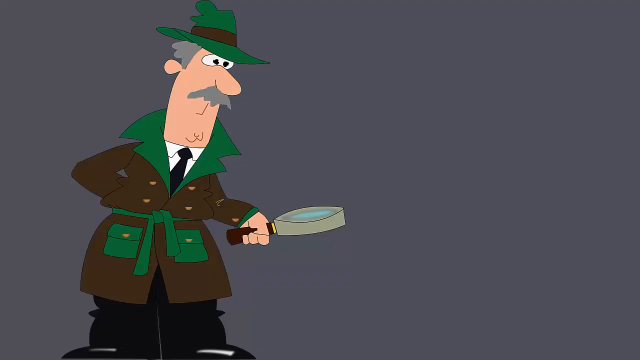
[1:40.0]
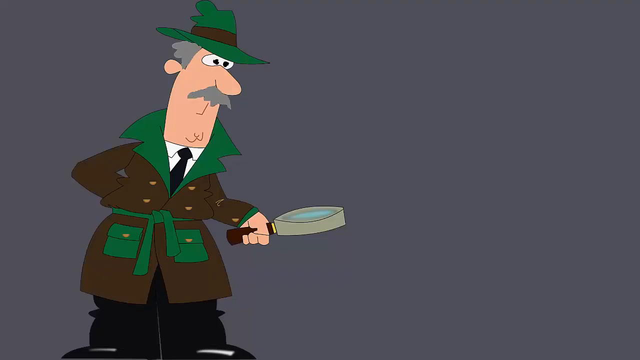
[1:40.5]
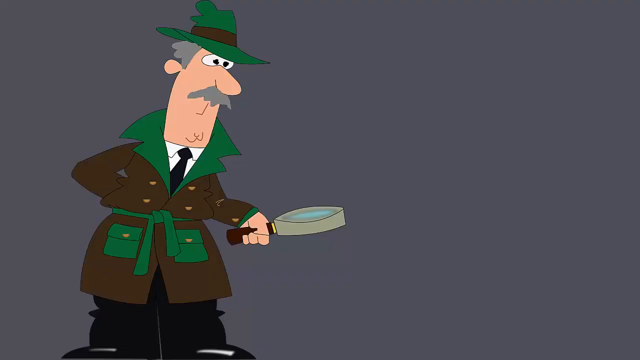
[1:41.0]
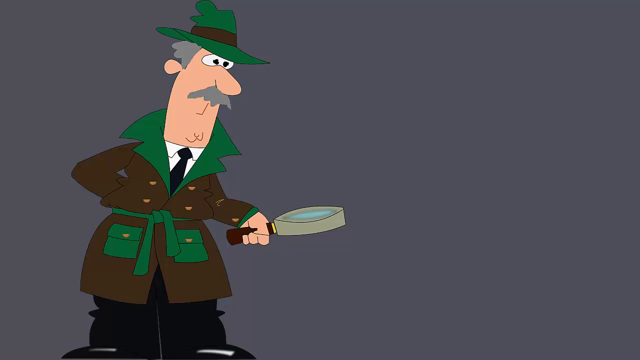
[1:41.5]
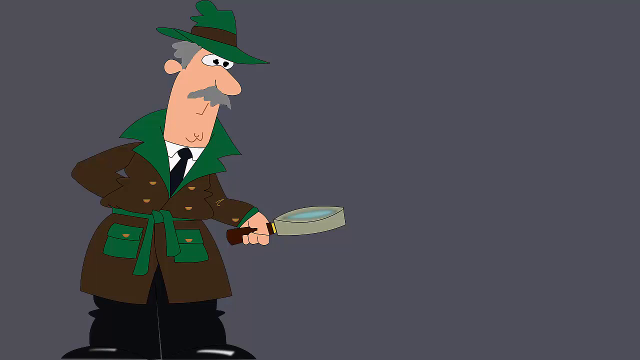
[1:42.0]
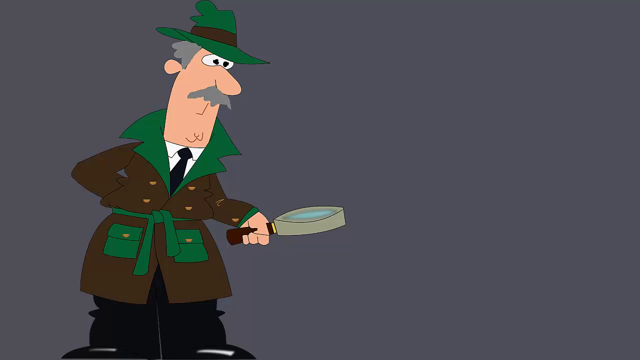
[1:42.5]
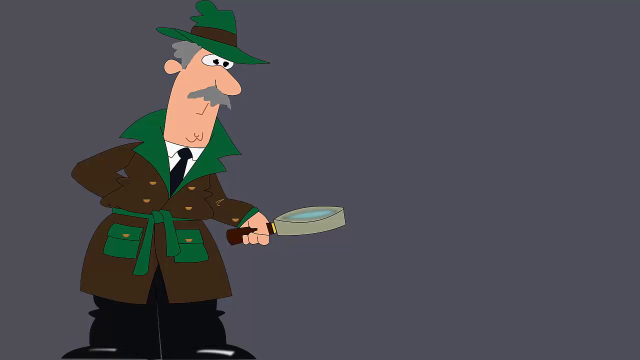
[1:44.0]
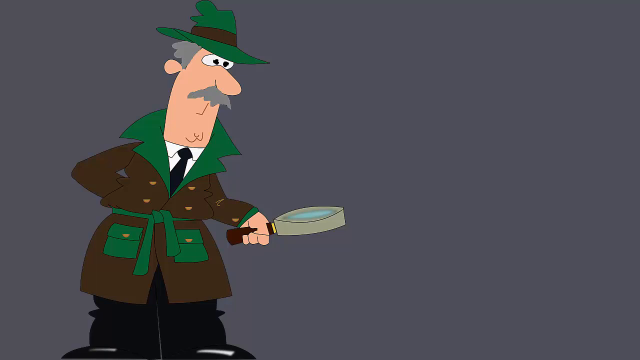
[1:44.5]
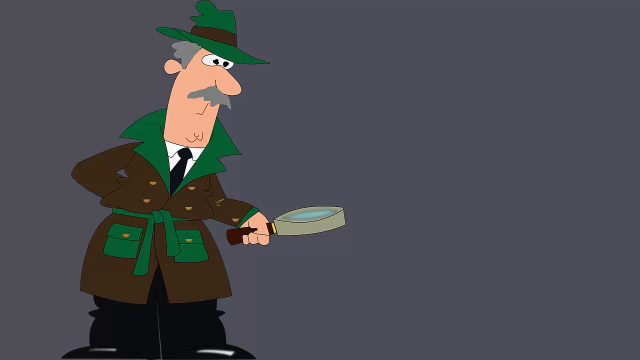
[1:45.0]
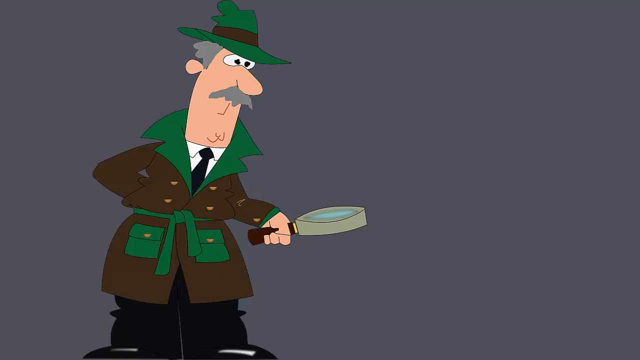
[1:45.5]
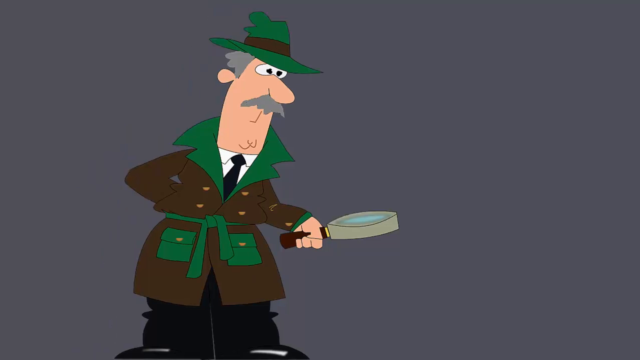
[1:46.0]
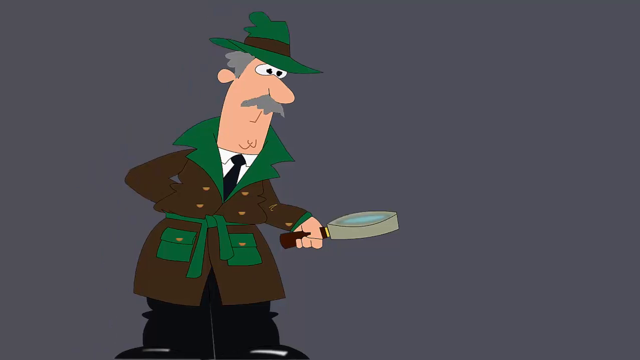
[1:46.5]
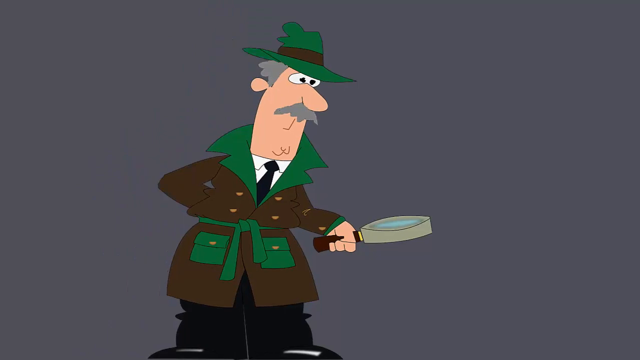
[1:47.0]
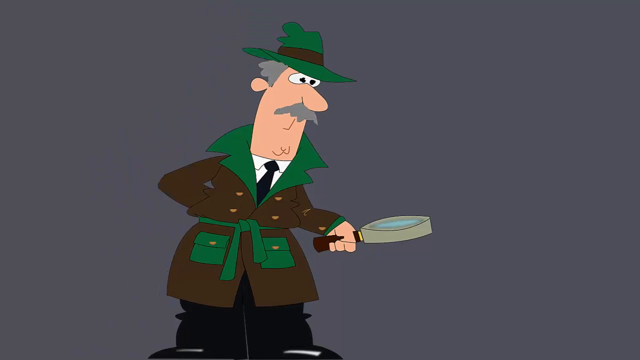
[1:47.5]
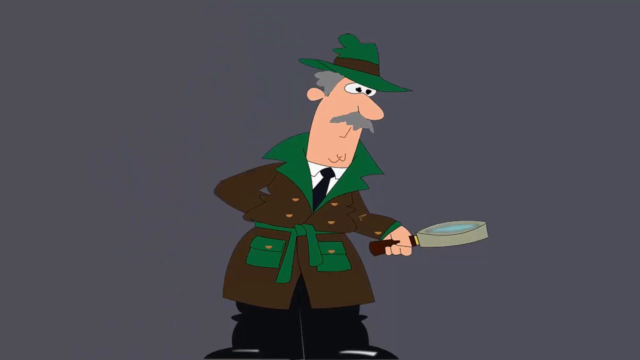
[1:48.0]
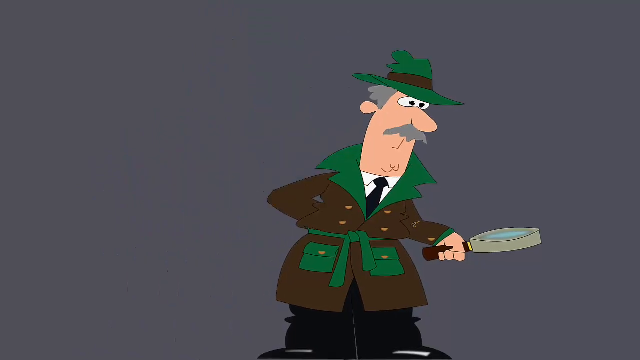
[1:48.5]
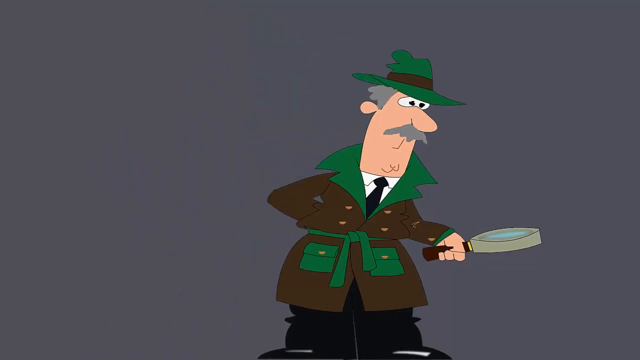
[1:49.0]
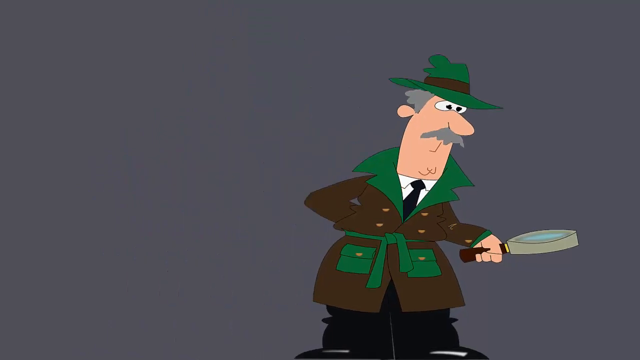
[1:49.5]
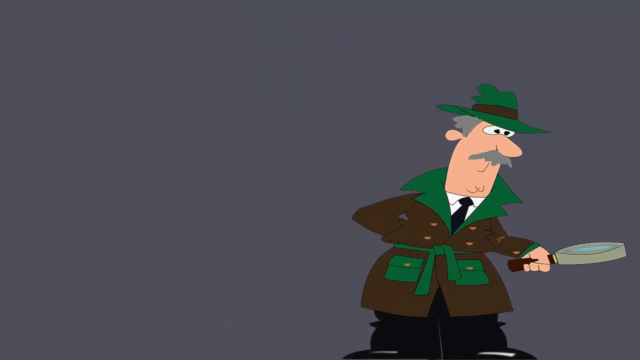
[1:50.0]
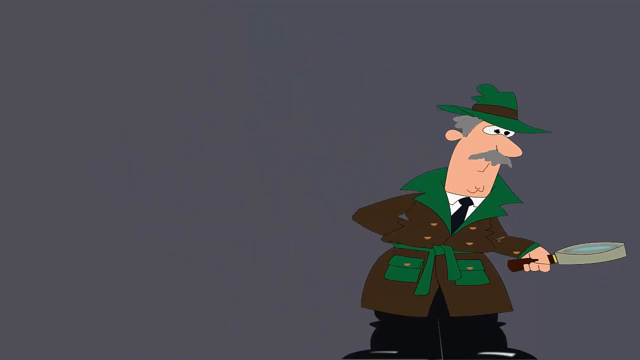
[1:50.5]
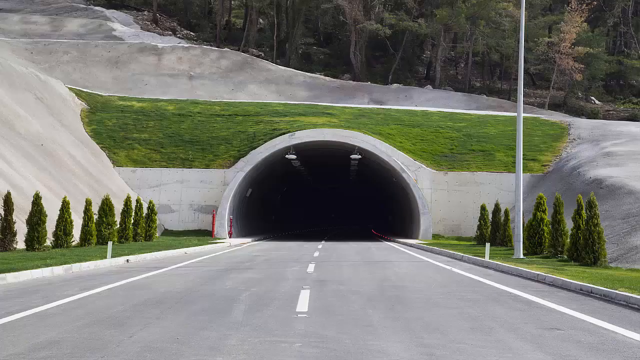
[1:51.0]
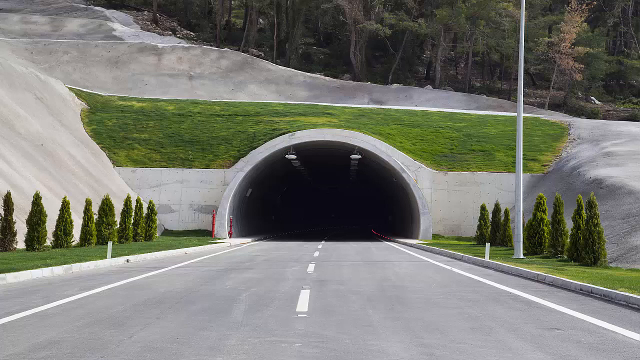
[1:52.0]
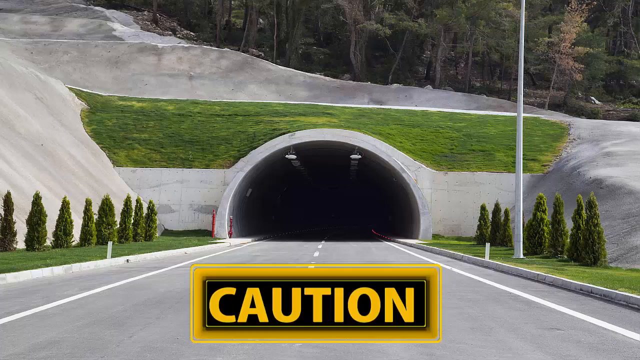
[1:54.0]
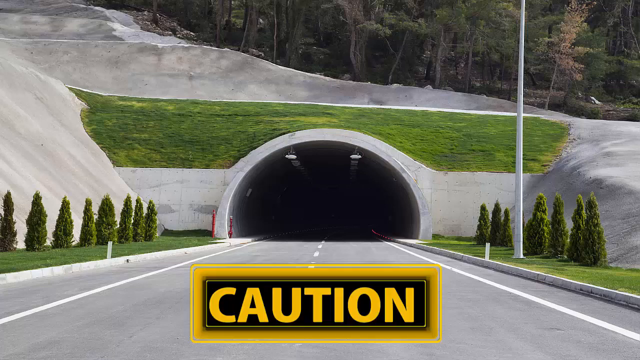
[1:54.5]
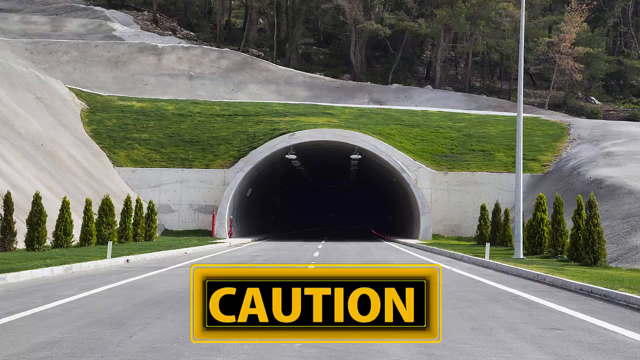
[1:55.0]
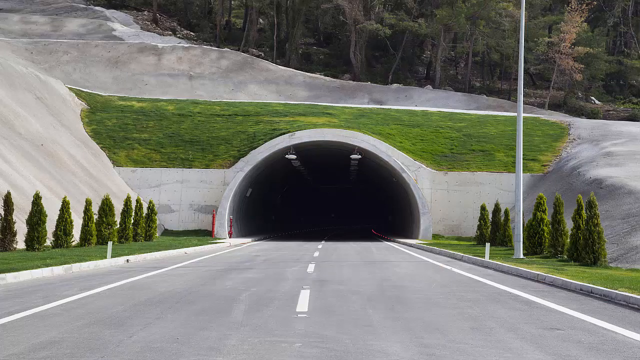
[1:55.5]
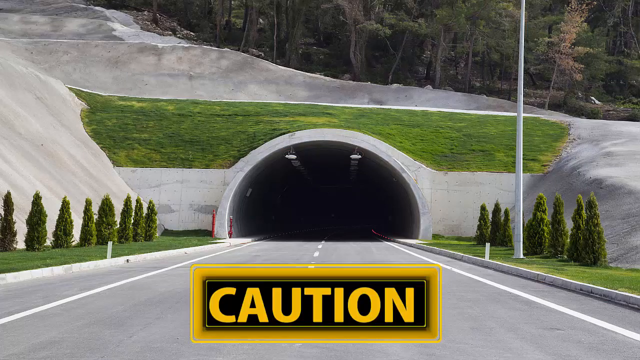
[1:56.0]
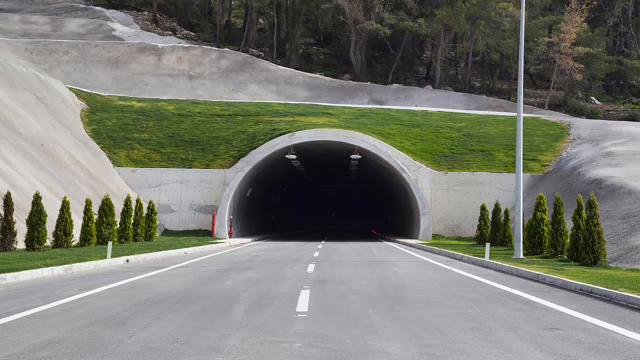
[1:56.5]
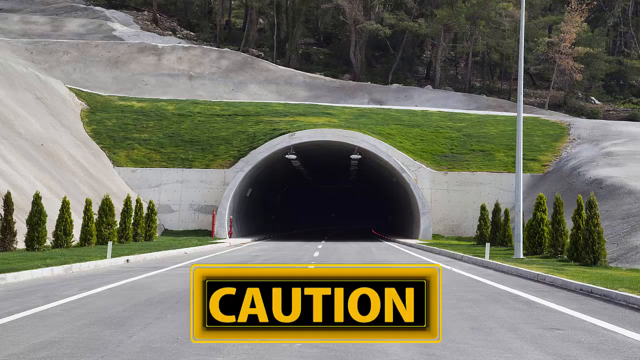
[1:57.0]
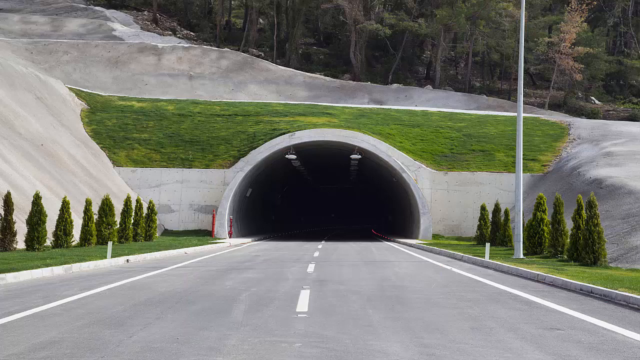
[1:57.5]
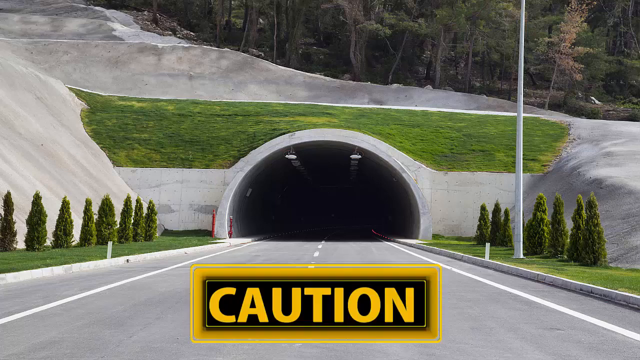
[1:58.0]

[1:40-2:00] An animation shows a cartoon character: a white man with gray hair and a gray mustache, wearing a green hat, a brown coat with a little green in it, black pants and black shoes, carrying a magnifying glass. He has almost an Inspector Gadget kind of look. The animation movement is very slow. Next comes footage, possibly CGI or real, of a road and a tunnel, with some grass above the tunnel and a bunch of trees in the background. The surroundings look like concrete, with concrete-like hills. The tunnel has lights. The word "caution" flashes on the screen in yellow writing on a black background with a yellow border. The view then returns to the Inspector Gadget-looking man. He also wears a white shirt and what looks like a black tie. The magnifying glass has a blue, glass-like look, its handle looks brown, and there is a little yellow ring and a grayish surround around the glass.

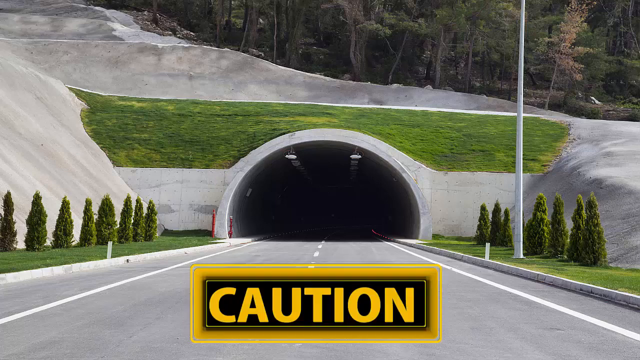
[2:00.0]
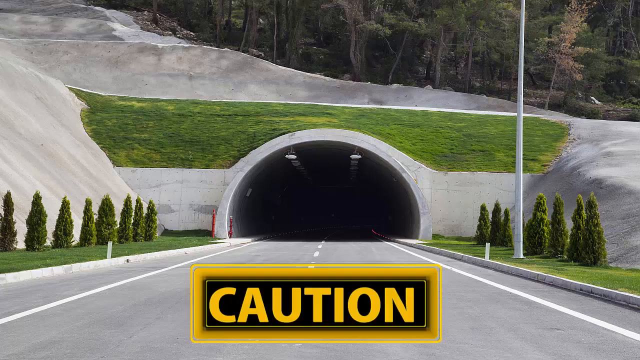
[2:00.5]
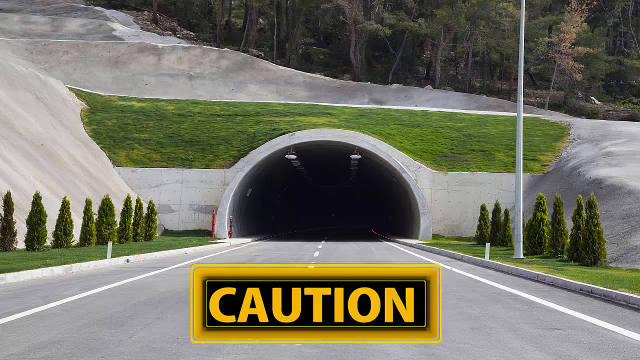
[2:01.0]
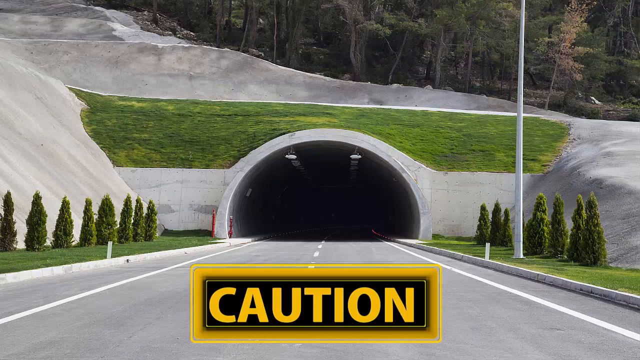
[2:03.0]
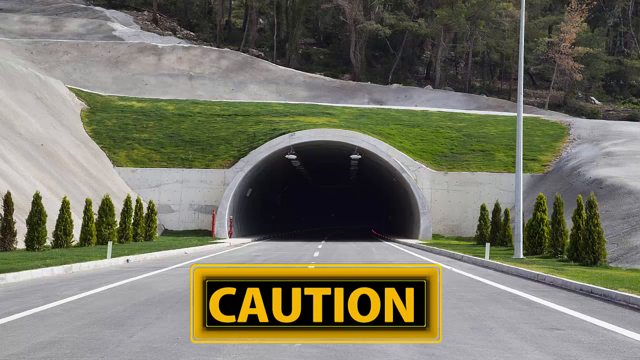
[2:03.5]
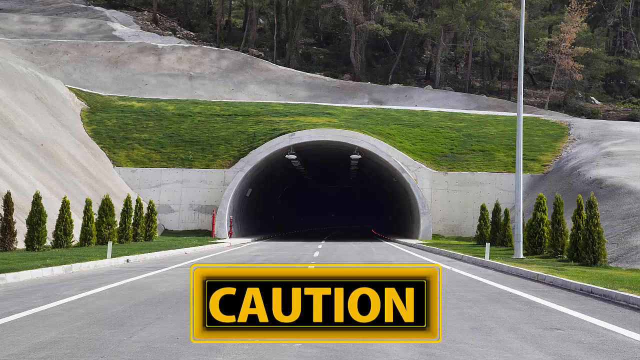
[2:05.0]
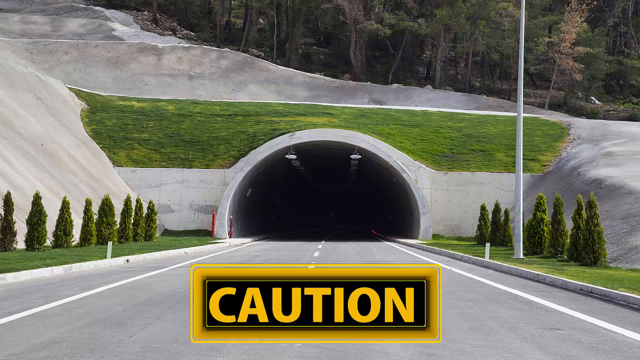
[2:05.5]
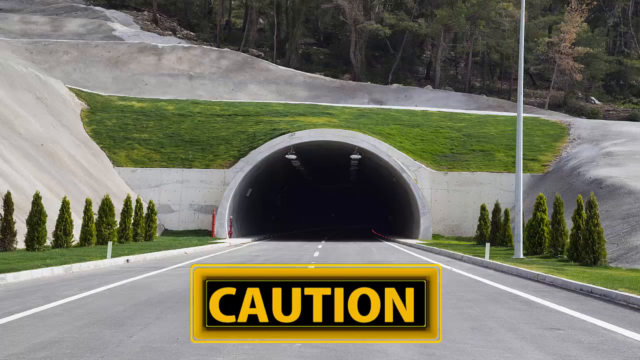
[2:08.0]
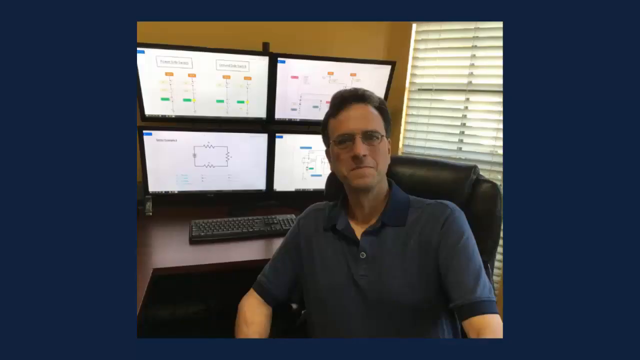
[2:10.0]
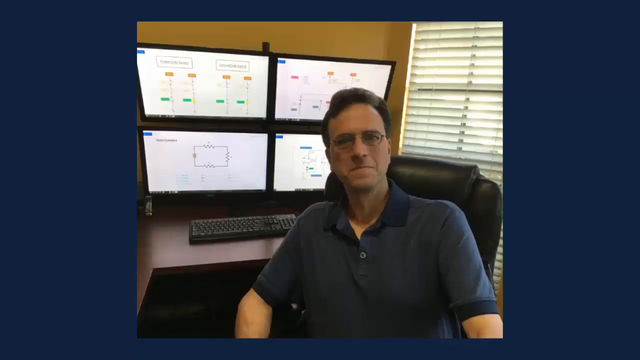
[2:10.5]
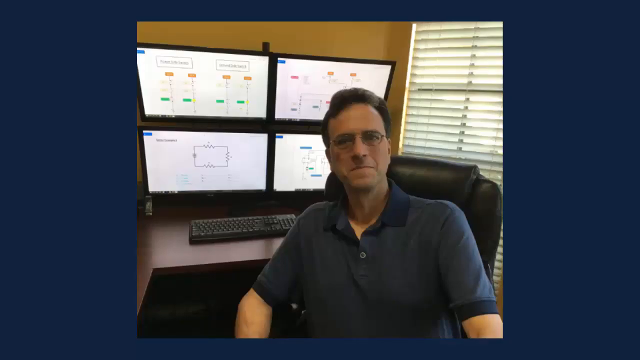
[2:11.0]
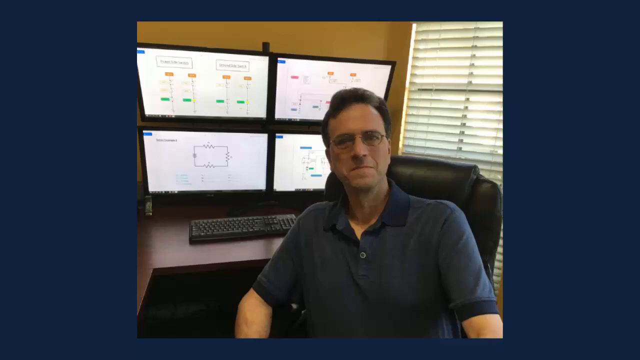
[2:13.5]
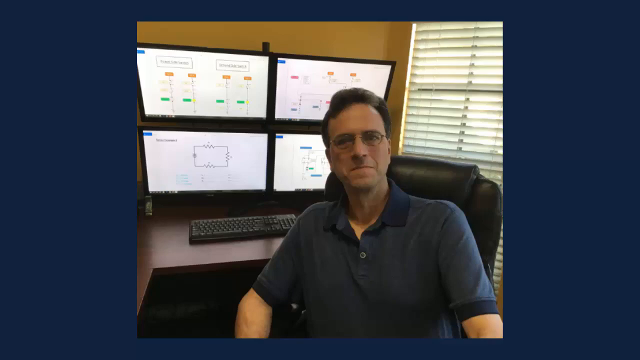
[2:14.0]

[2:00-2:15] The view of what looks like a tunnel on a road continues. "Caution" flashes on the screen in yellow lettering on a black background. Little evergreen trees are on the right and left sides of the road, and big trees are in the upper part of the screen in the background. A little bit of grass is over the round top of the tunnel, and what looks like a lot of concrete is around the whole area. Nothing else happens for a moment. The view then returns to the man in a freeze frame at a desk with four monitors, a black chair, a brown desk and a keyboard. He wears glasses and a bluish shirt.